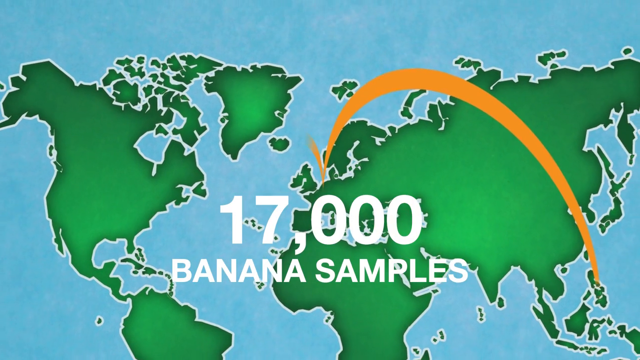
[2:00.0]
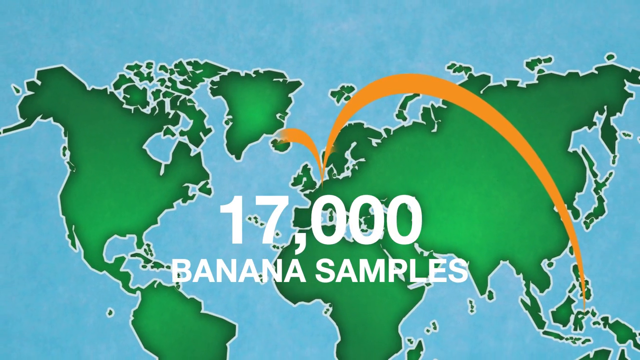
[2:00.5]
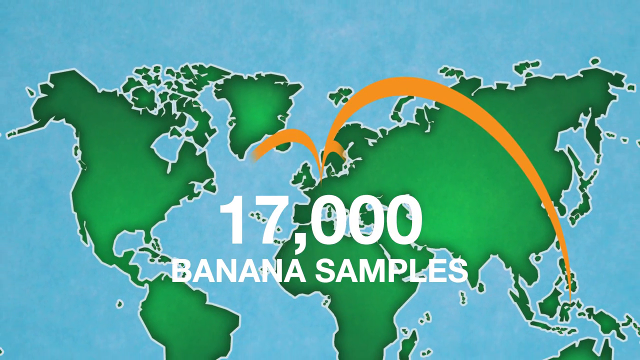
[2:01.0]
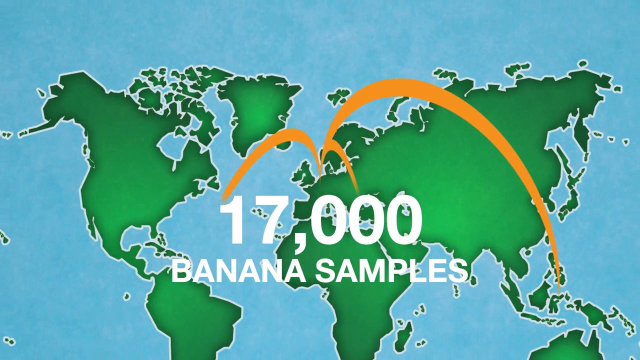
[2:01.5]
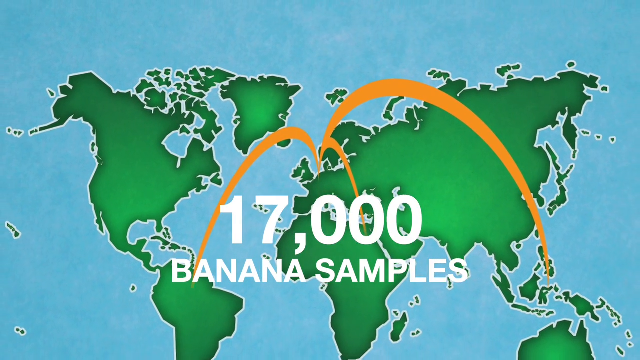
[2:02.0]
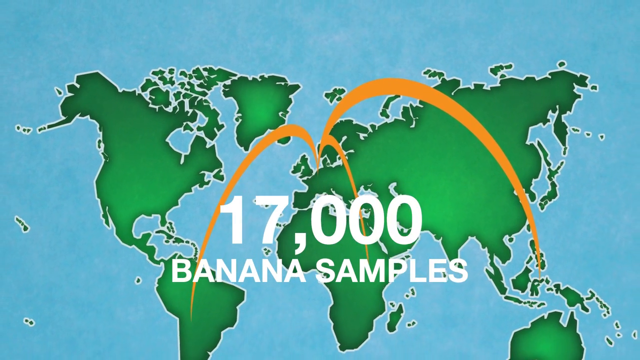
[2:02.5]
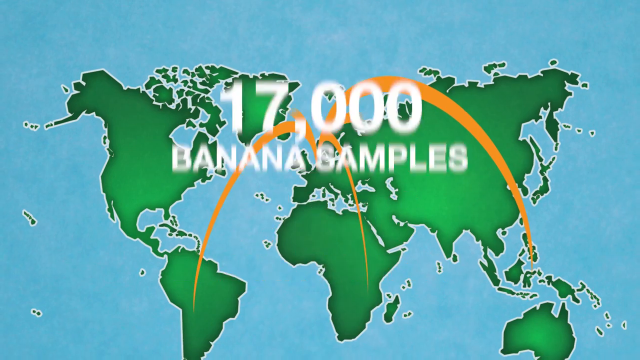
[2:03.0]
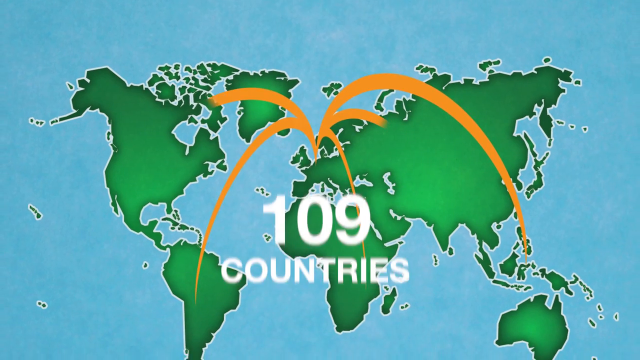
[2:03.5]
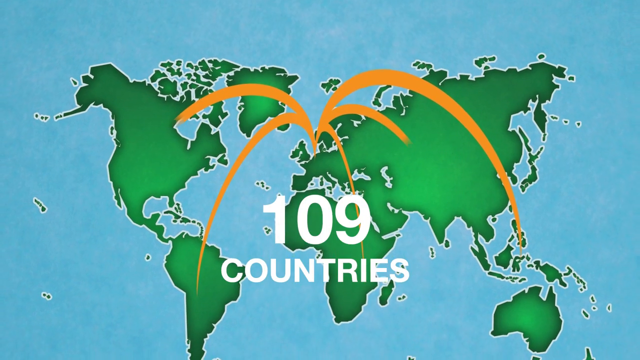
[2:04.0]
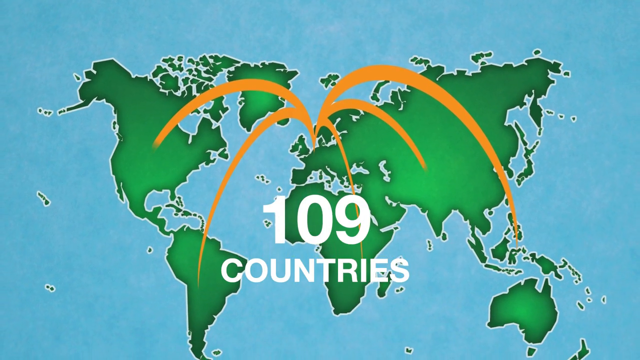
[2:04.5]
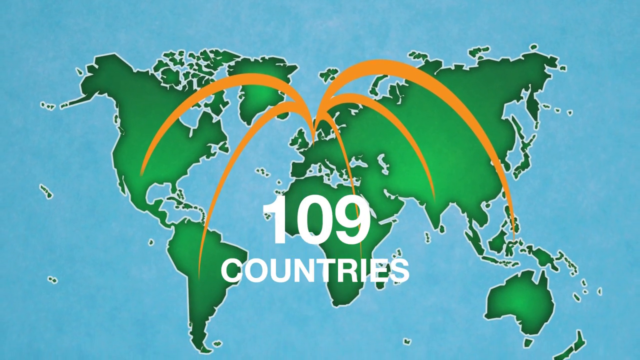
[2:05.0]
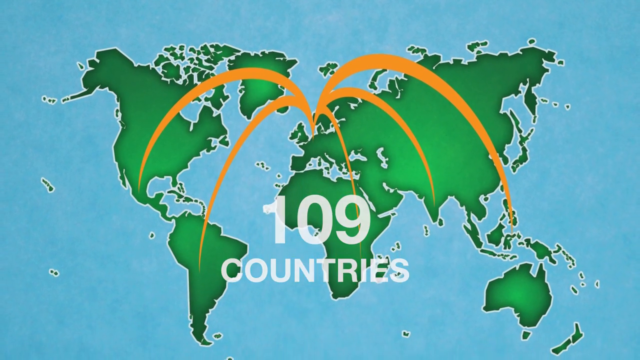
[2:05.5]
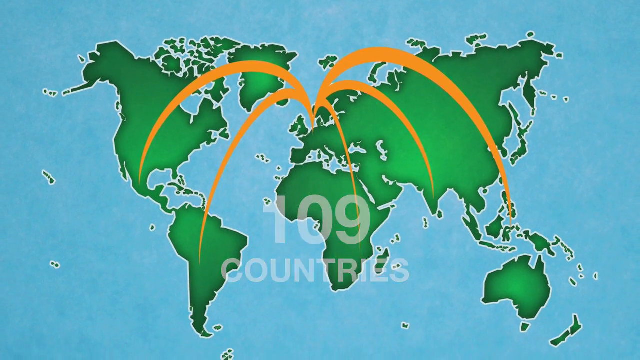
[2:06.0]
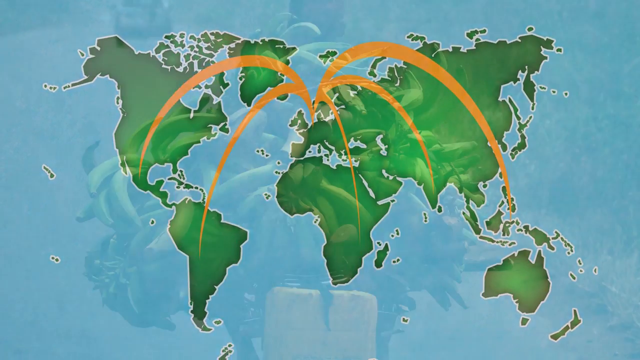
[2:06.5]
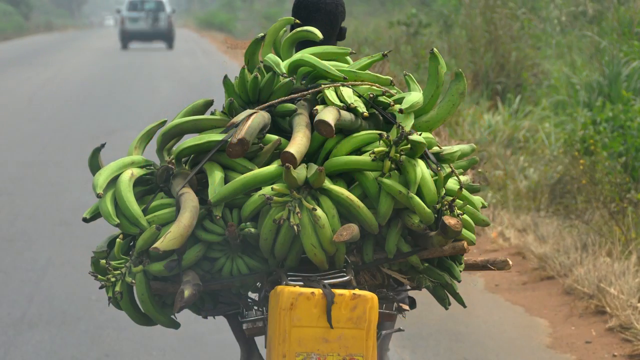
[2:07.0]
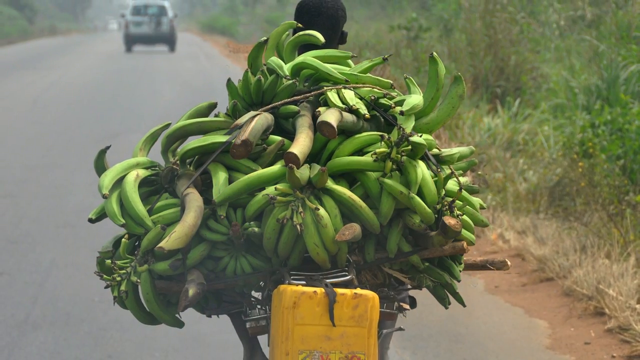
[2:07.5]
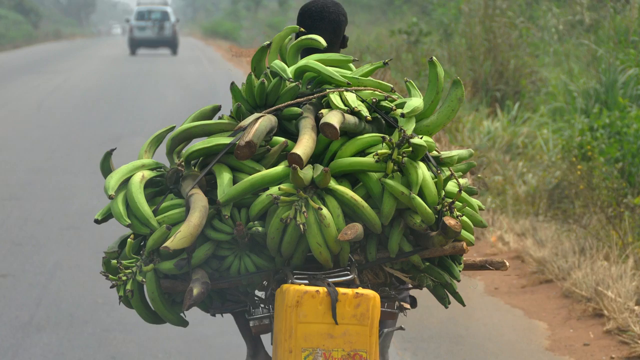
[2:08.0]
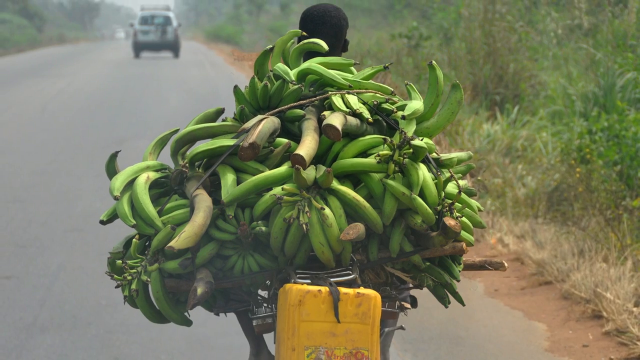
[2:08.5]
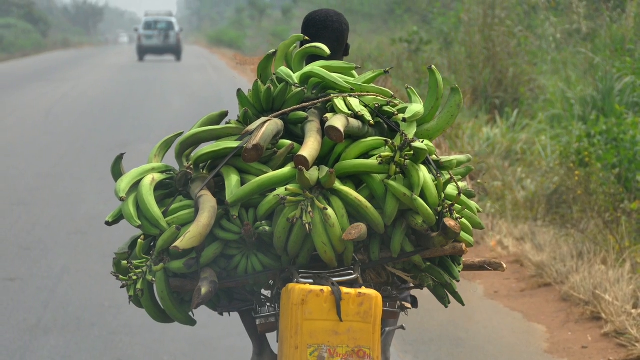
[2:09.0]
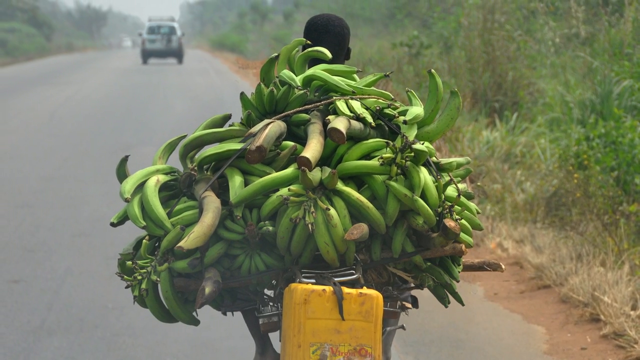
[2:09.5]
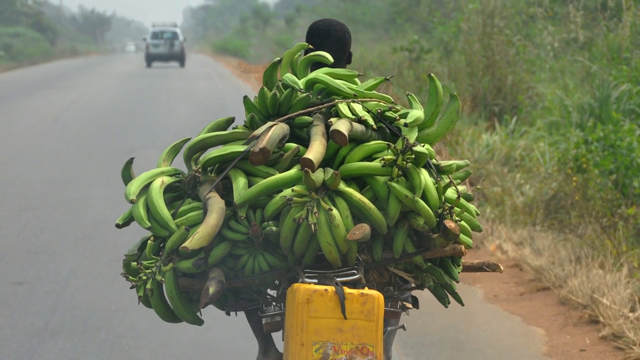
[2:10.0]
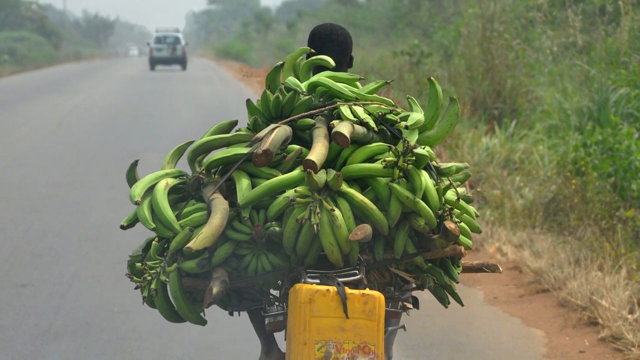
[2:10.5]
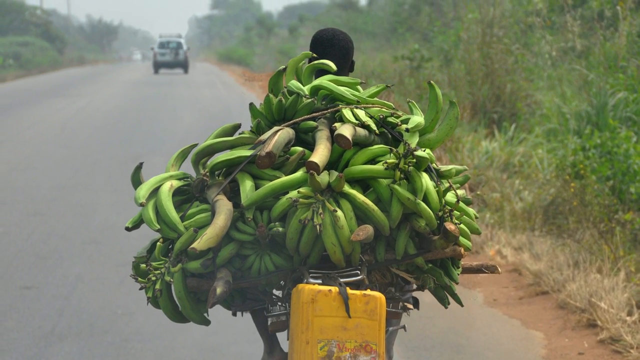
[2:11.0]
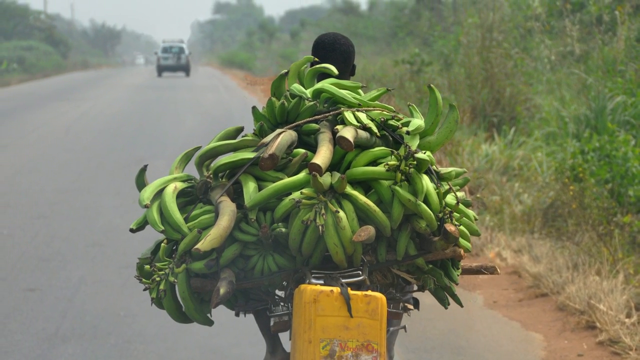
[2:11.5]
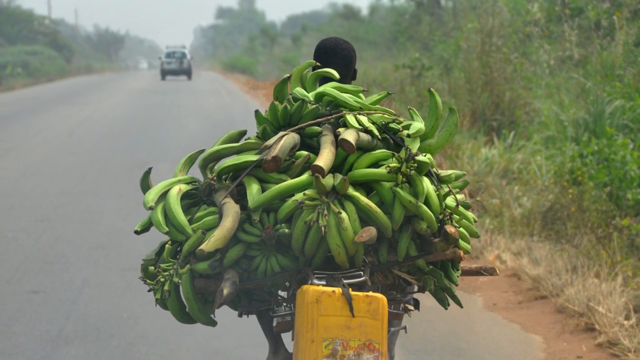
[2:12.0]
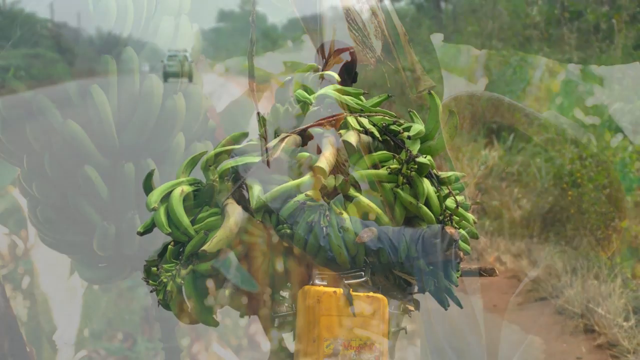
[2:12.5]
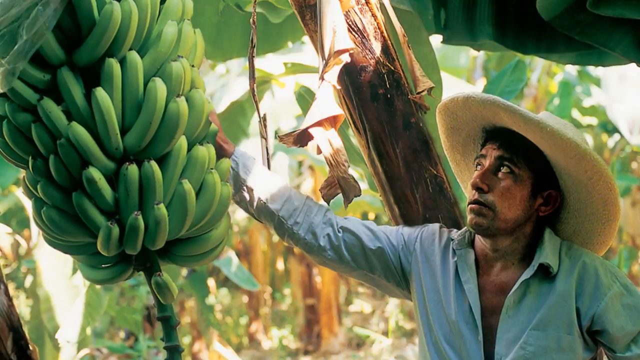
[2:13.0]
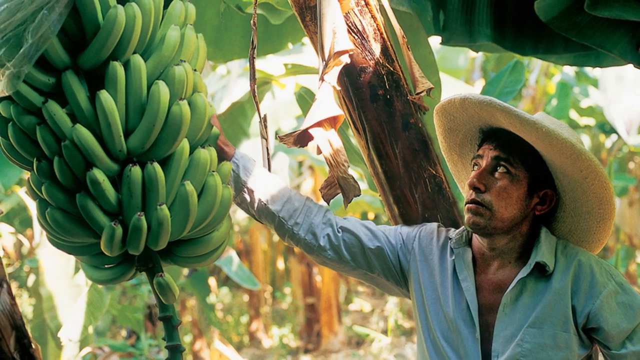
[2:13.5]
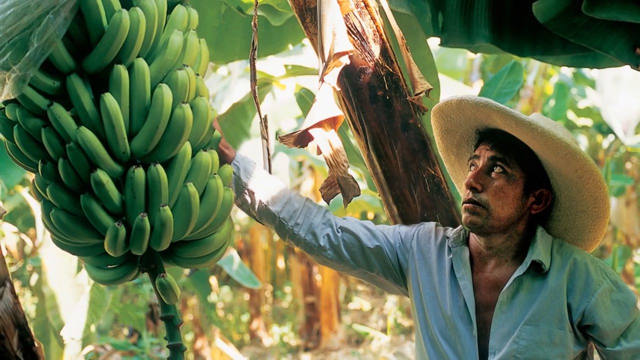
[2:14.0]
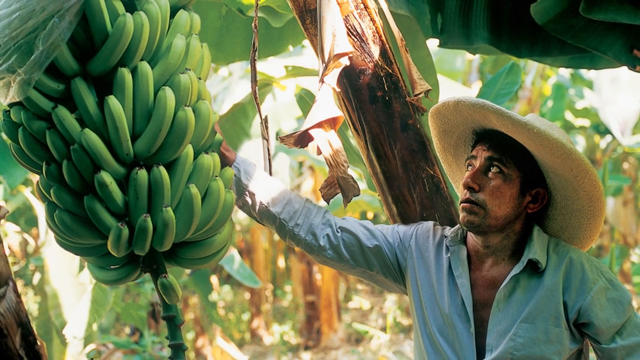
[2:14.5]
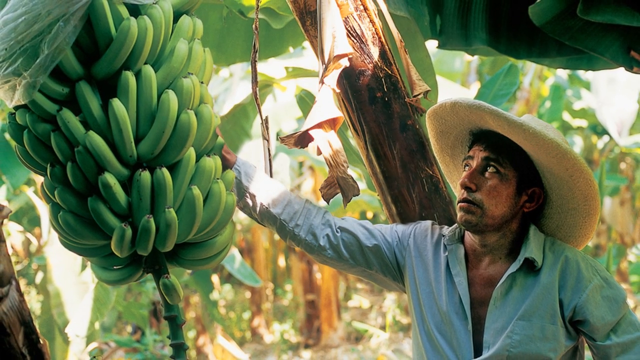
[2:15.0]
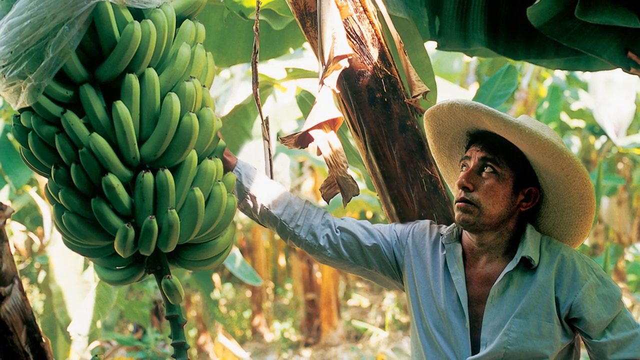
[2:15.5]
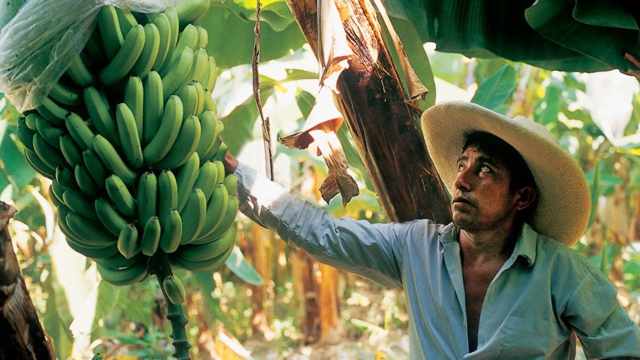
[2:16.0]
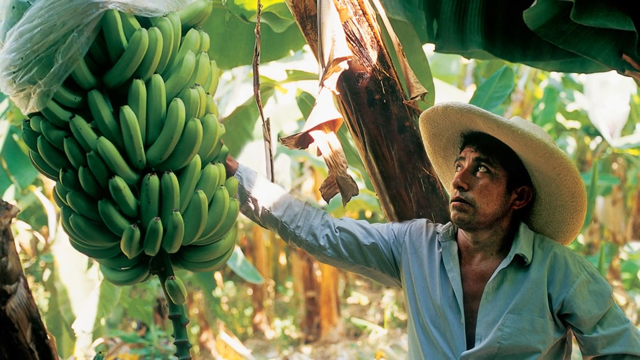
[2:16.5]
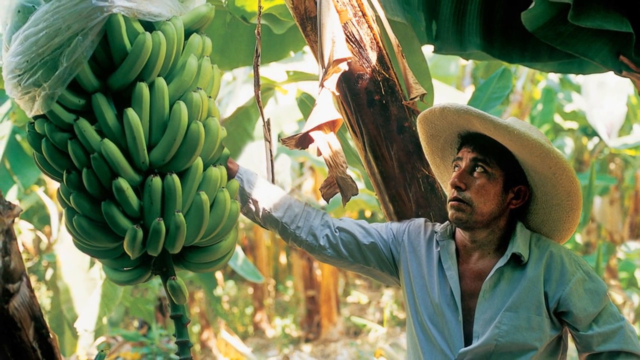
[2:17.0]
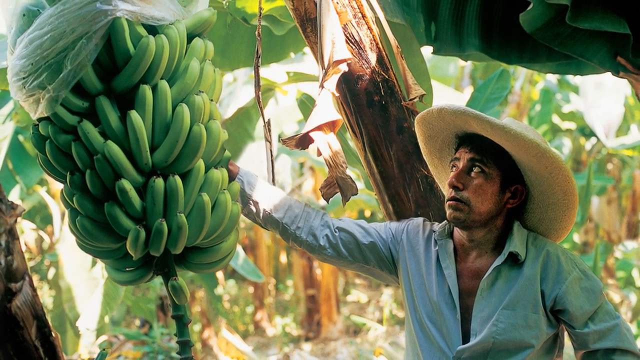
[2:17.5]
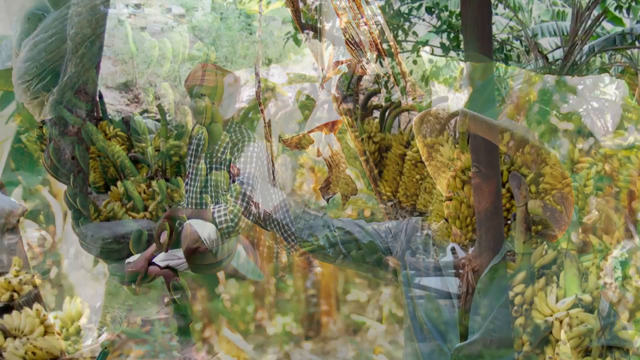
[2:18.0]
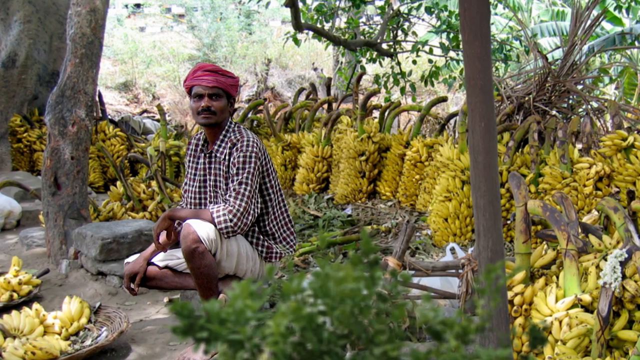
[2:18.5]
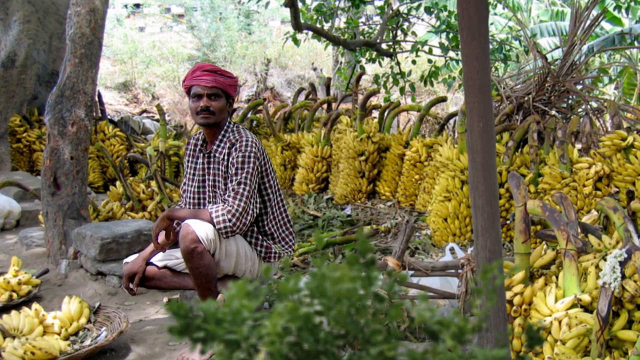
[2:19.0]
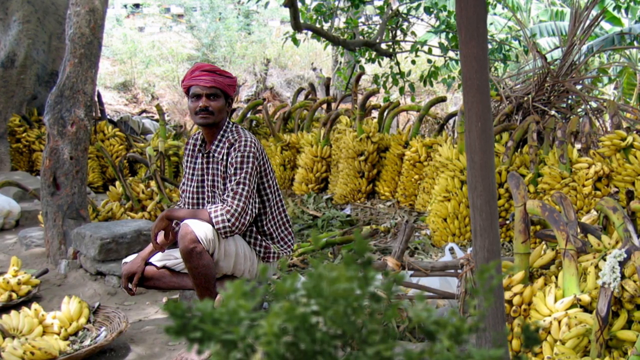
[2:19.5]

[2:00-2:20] The text "17,000 banana samples" is shown over the map; after it goes away, the text "109 countries" appears. The video then leaves the map or globe and shows what looks to be a person on a bicycle, with many bunches of bananas tied together on the back; the rider appears to be an African American male. Another car is visible in the distance. Next is an image that looks like a painting of a man outdoors in a sombrero-type hat and a long-sleeve white shirt that seems to be unbuttoned quite a bit; he holds multiple bunches of bananas and looks up at them. The view continues to zoom out, revealing a photograph of a man sitting or kneeling toward the ground in front of many lines of bananas.